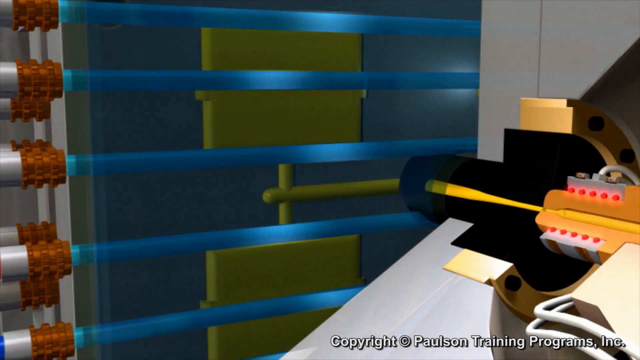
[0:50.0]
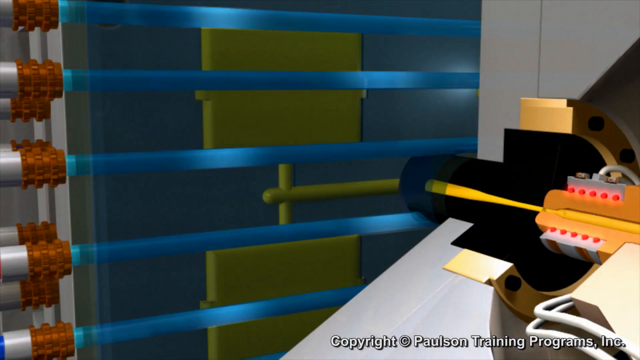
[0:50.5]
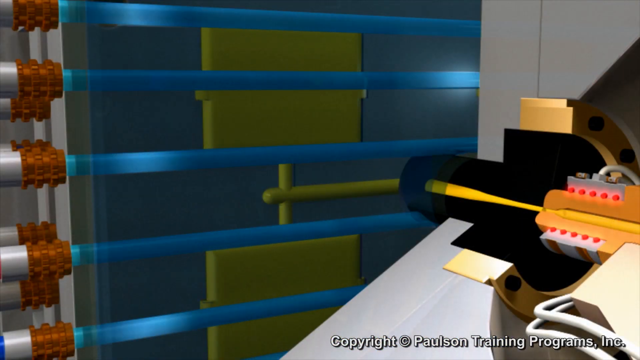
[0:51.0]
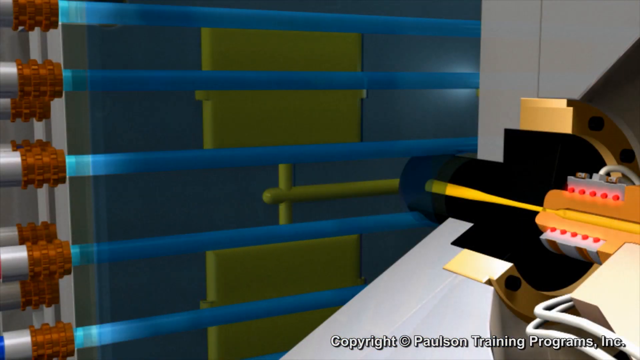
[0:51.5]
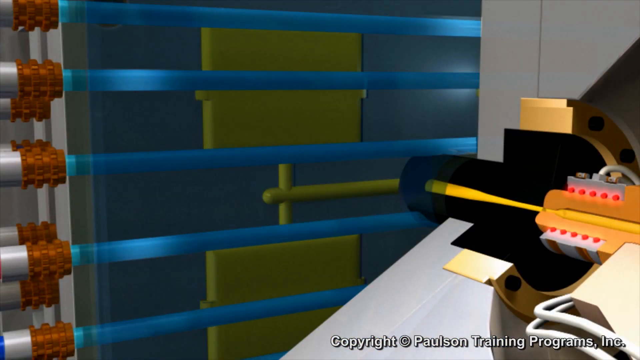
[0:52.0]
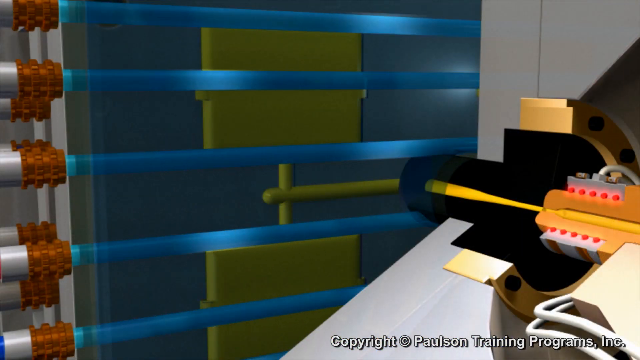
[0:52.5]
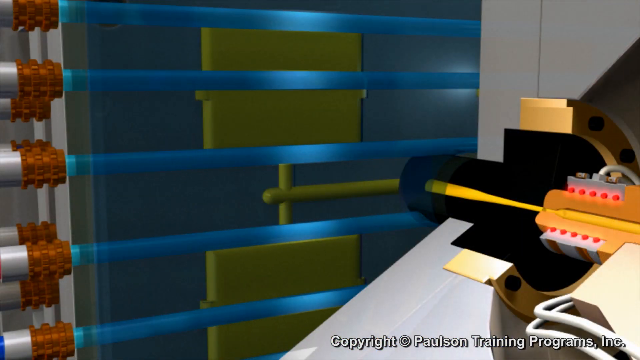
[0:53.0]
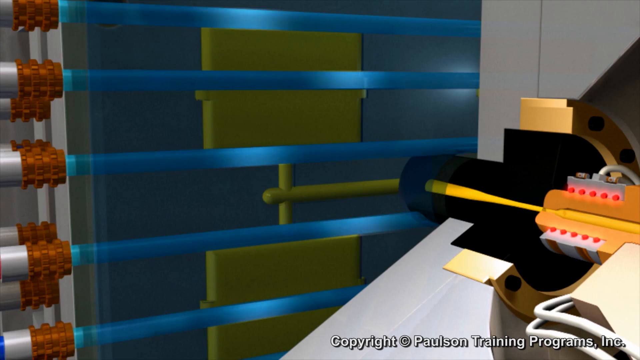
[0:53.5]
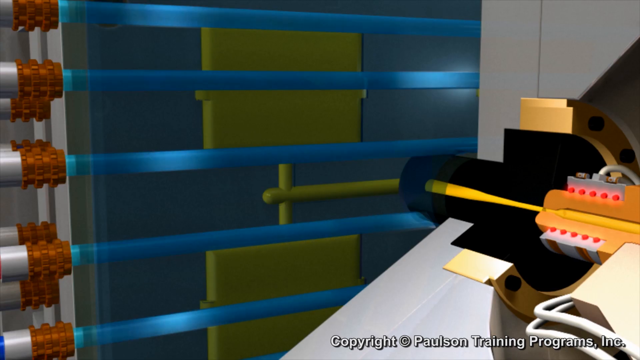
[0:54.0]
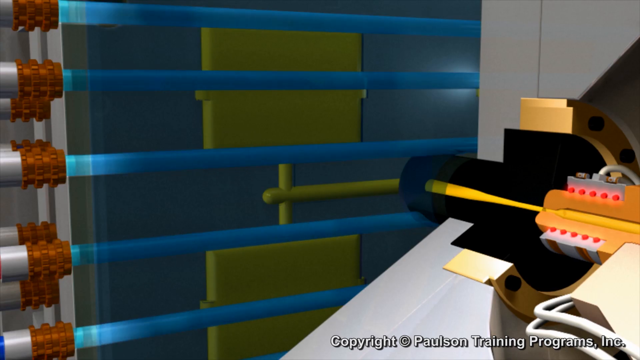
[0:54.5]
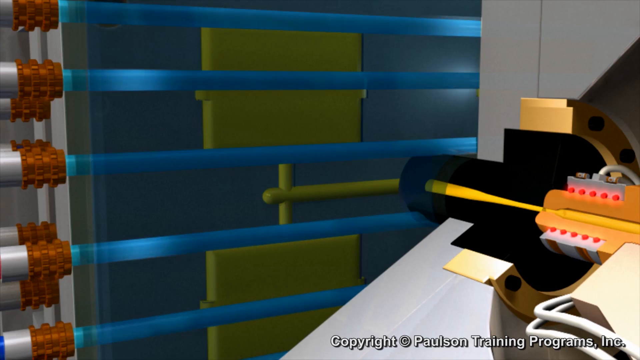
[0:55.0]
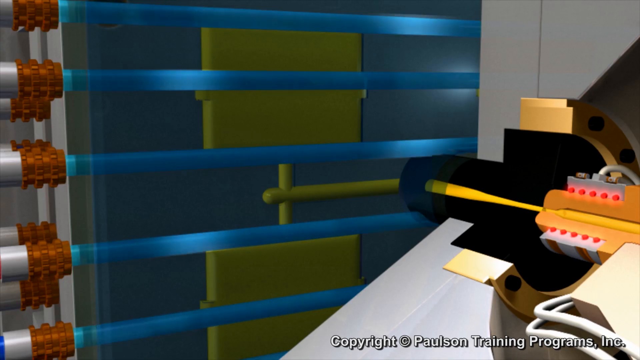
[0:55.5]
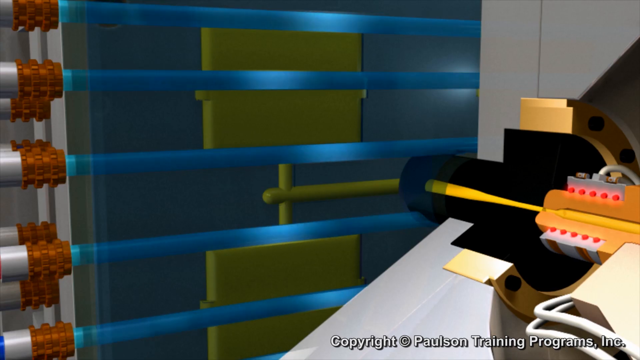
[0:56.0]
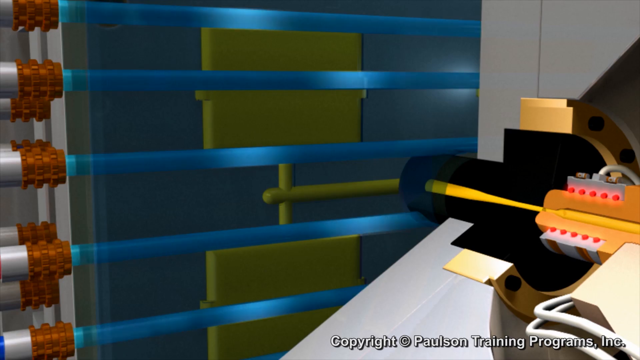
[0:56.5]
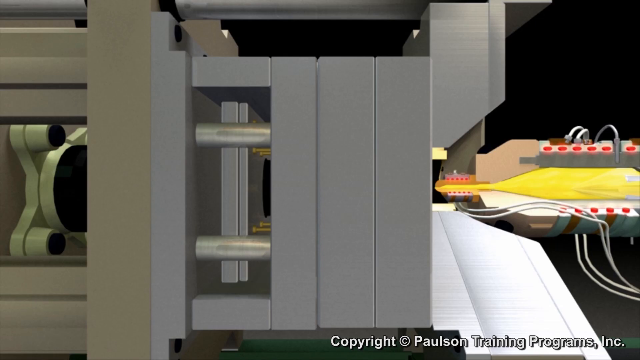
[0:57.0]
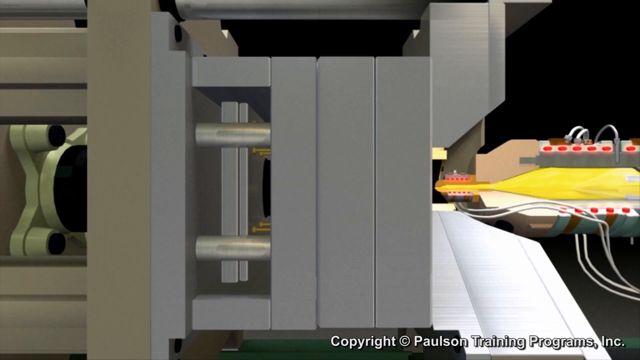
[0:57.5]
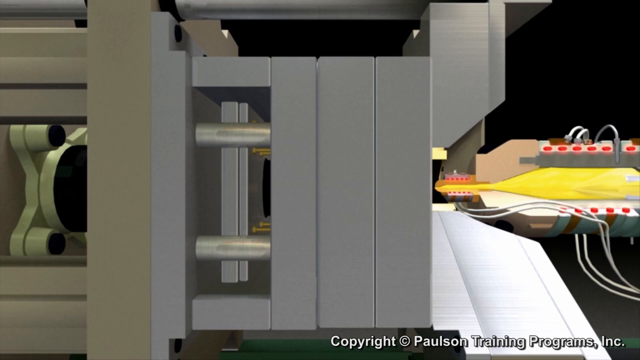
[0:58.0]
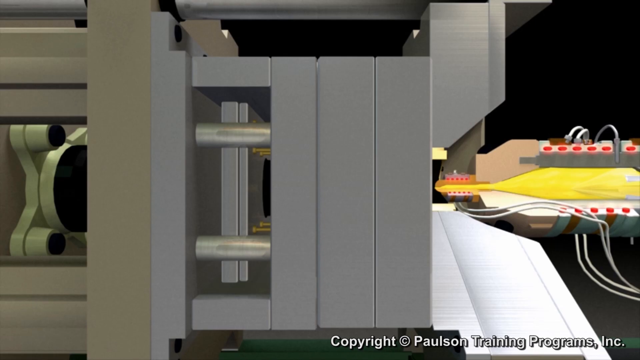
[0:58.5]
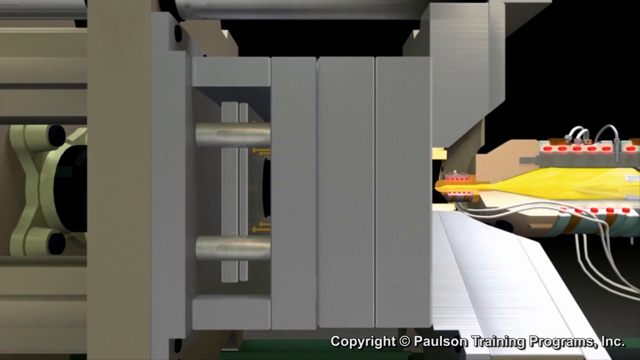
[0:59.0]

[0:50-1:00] An interior, x-ray-style view shows the inside of the two mold halves pressed together around the molten substance. The tubing runs throughout both halves internally, and light blue motion moving back and forth from the tubing represents the circulation of some type of coolant cooling and hardening the substance as it takes the shape of the mold. Blue tubes run parallel across the rectangular mold slab with the light blue area moving to and fro. Afterward, a side view shows the two halves of the mold clasped together, and the injector with the molten yellow liquid is no longer injecting into the mold while the substance inside cools.